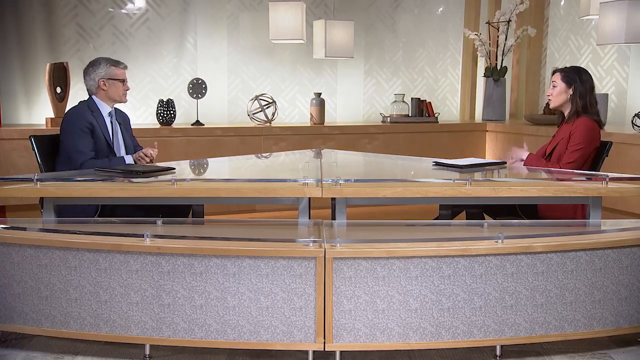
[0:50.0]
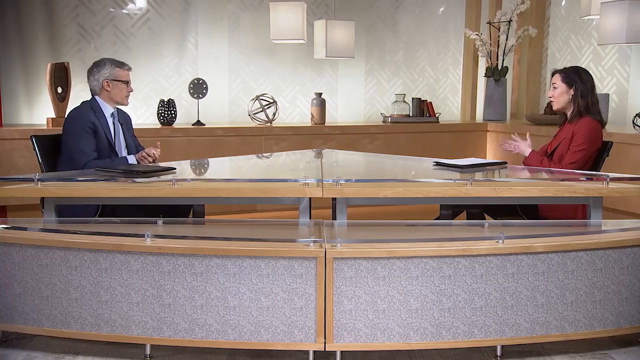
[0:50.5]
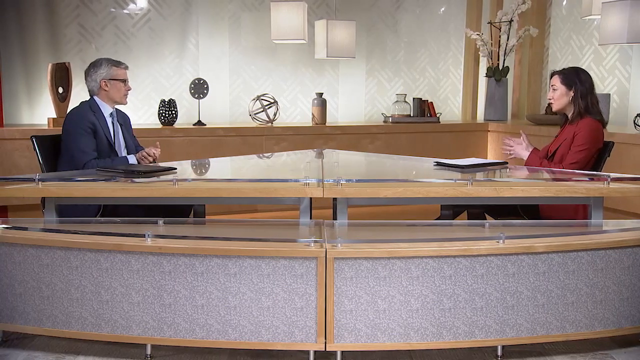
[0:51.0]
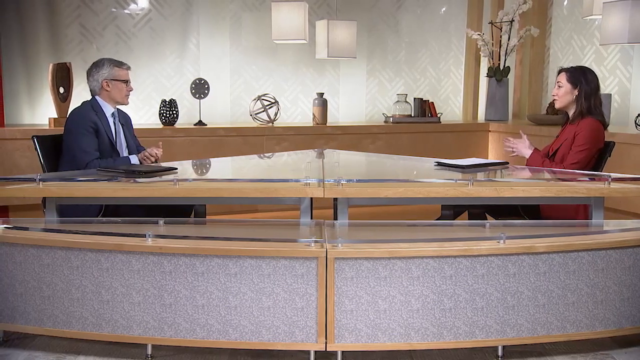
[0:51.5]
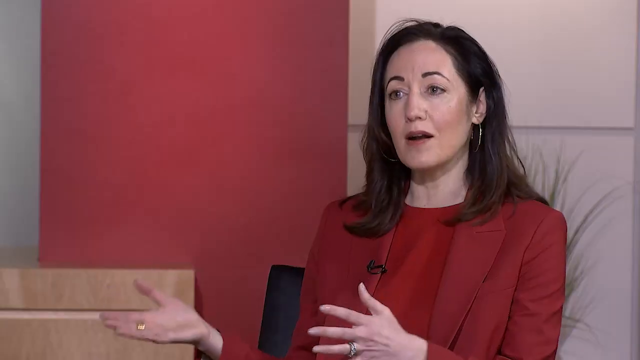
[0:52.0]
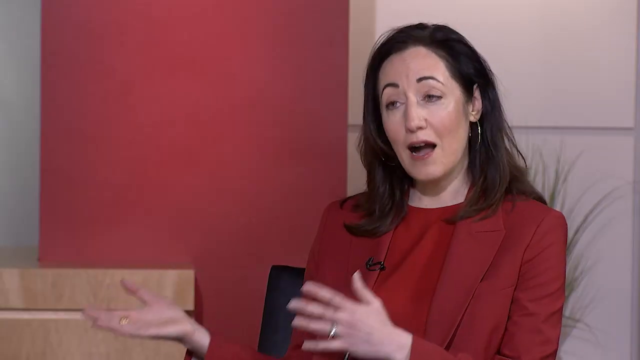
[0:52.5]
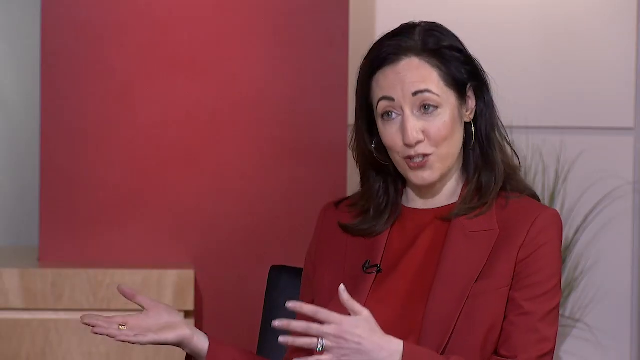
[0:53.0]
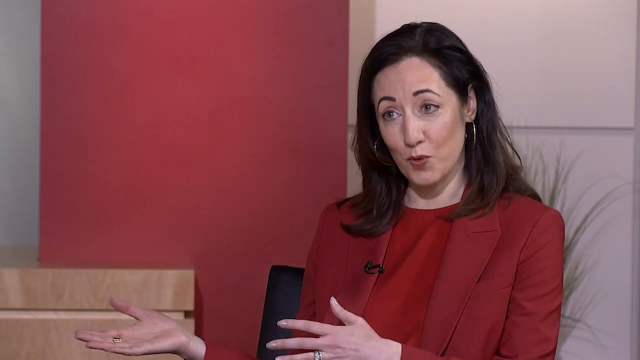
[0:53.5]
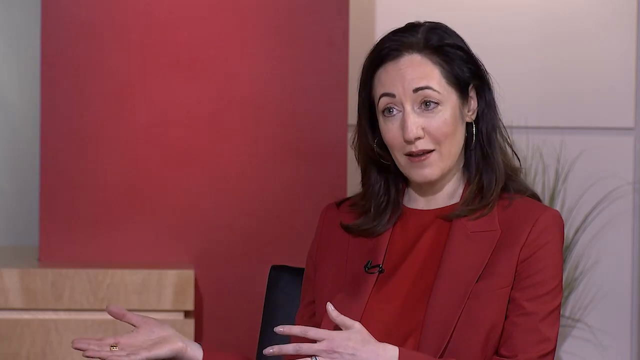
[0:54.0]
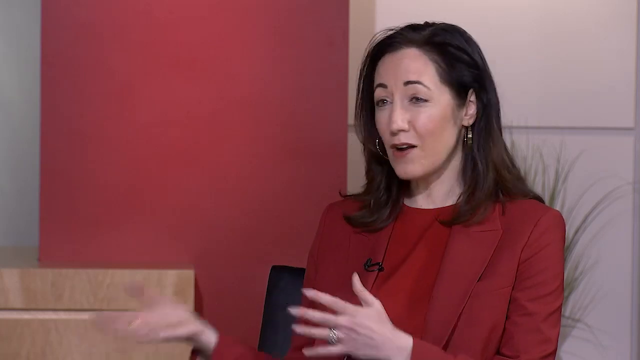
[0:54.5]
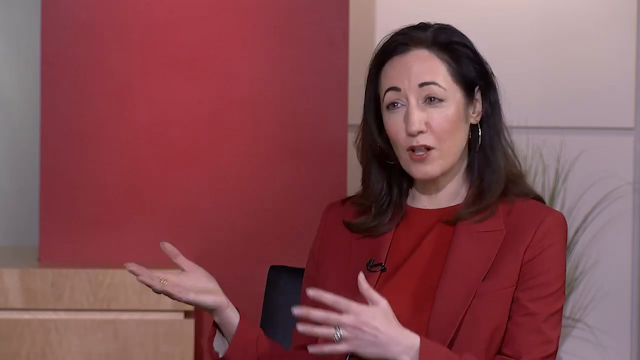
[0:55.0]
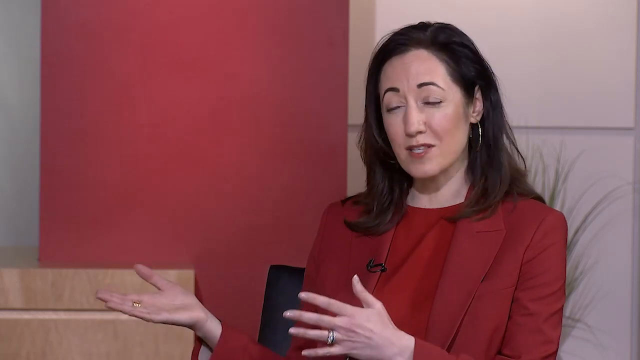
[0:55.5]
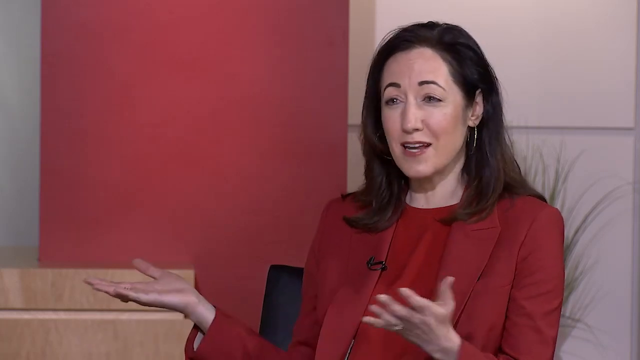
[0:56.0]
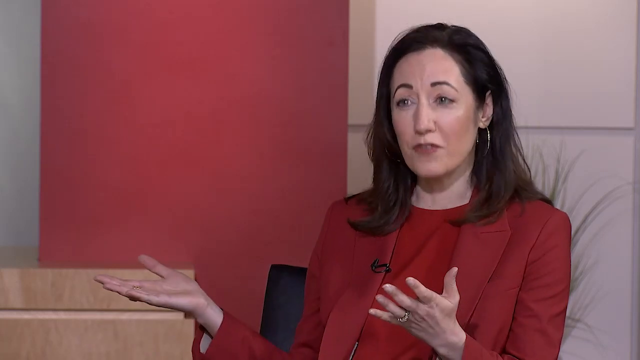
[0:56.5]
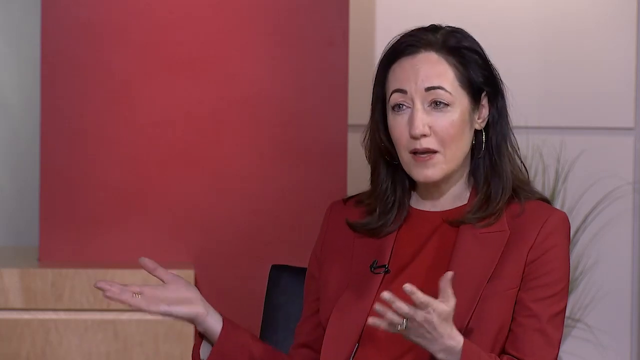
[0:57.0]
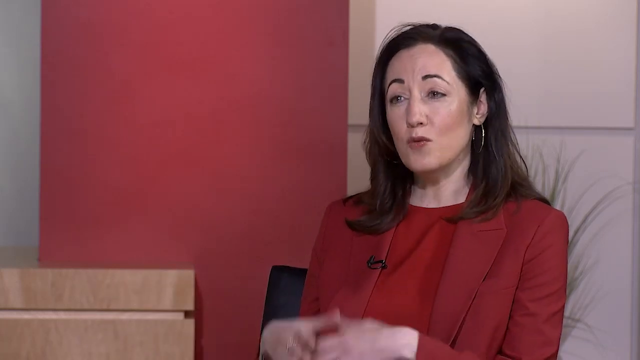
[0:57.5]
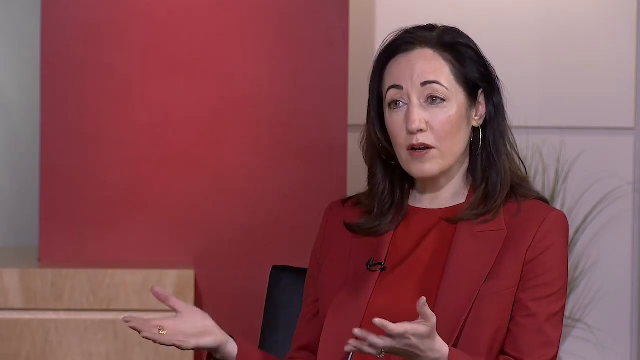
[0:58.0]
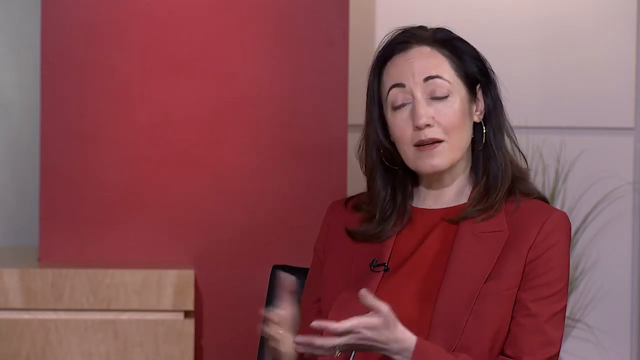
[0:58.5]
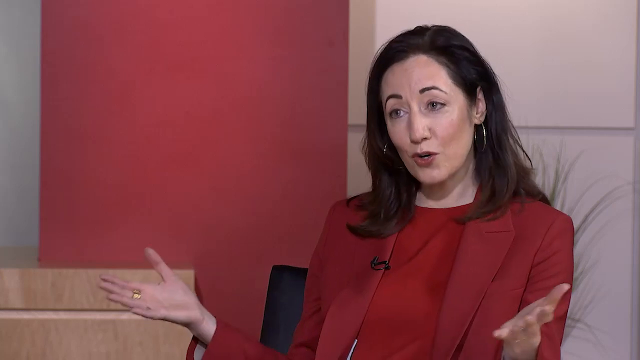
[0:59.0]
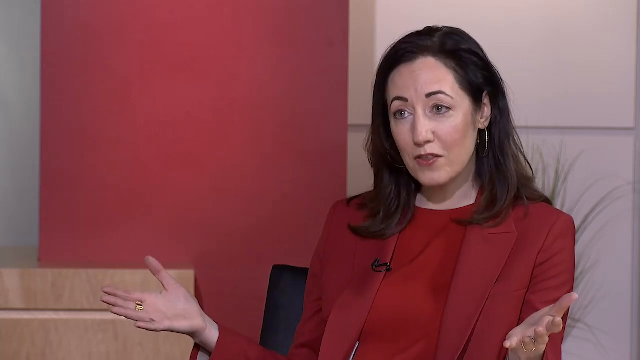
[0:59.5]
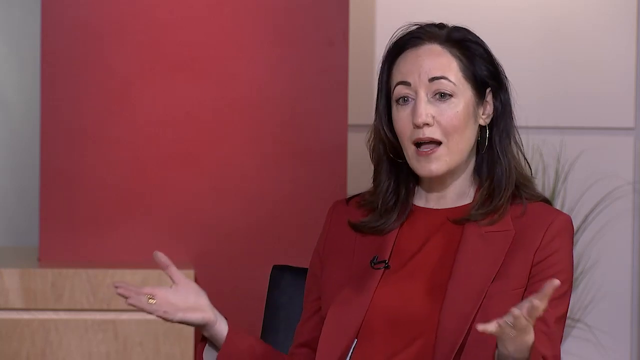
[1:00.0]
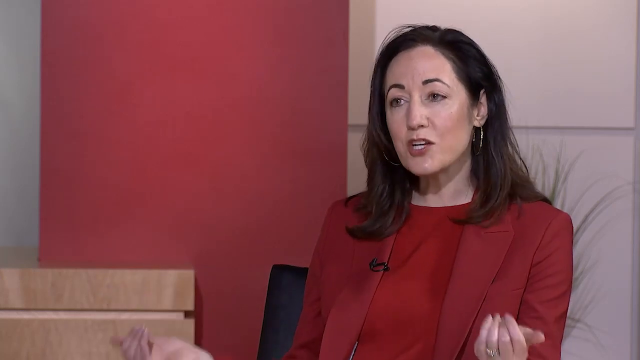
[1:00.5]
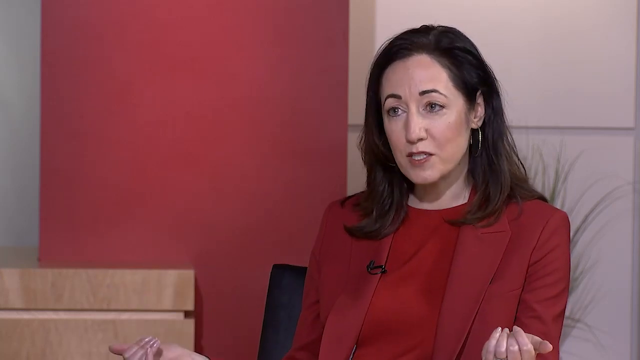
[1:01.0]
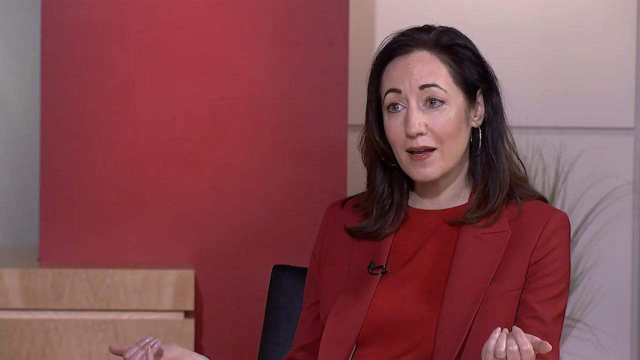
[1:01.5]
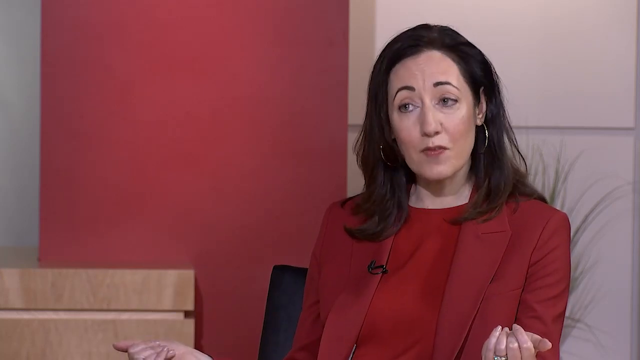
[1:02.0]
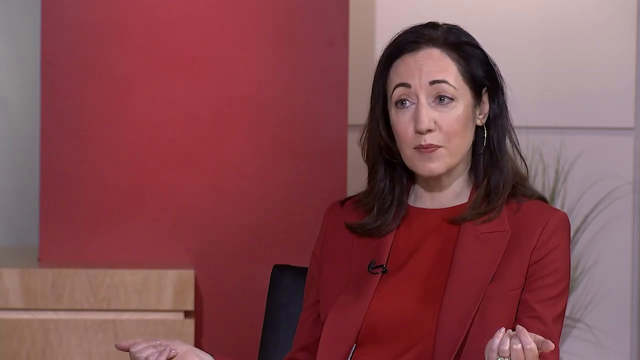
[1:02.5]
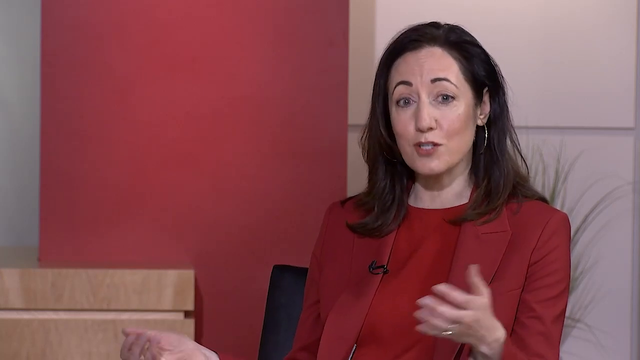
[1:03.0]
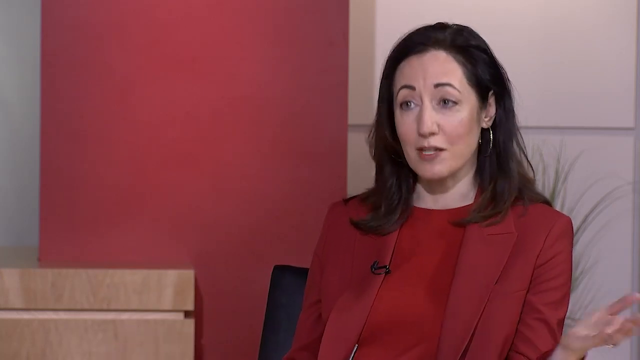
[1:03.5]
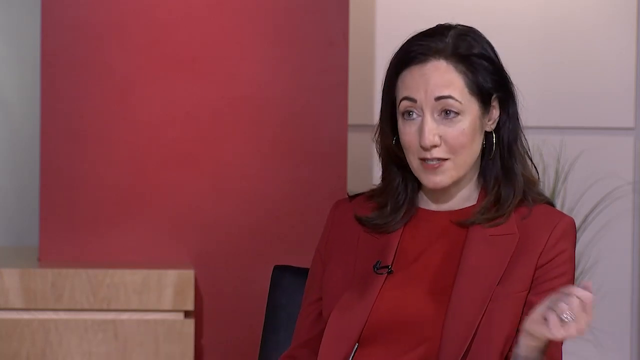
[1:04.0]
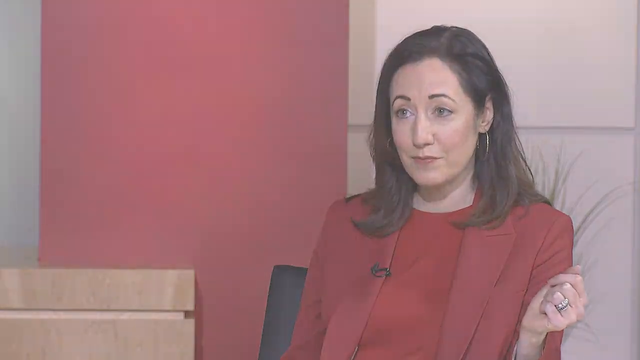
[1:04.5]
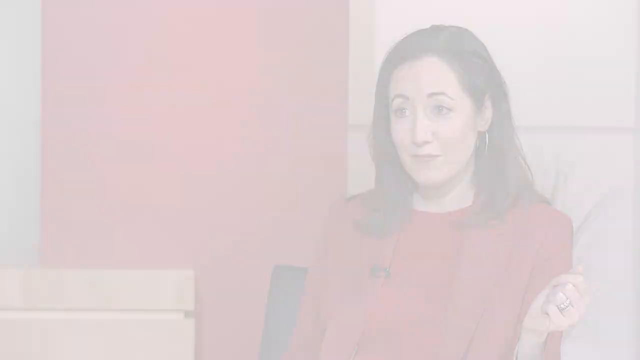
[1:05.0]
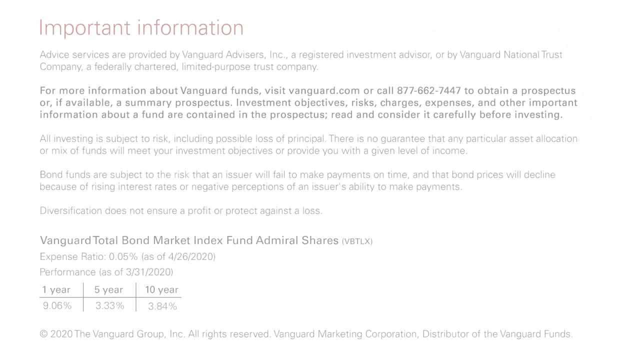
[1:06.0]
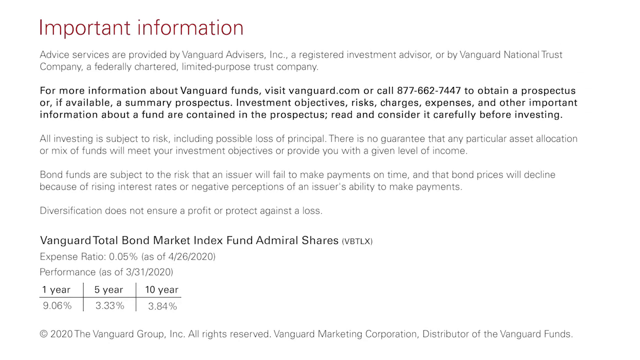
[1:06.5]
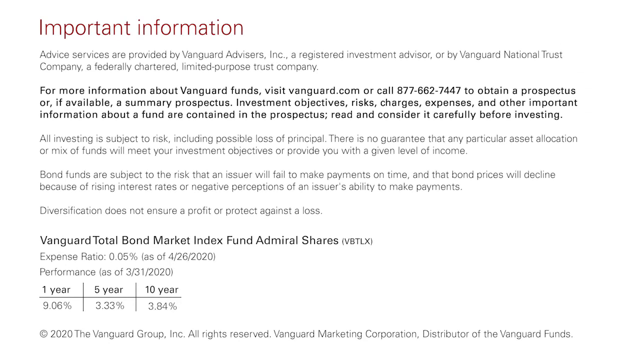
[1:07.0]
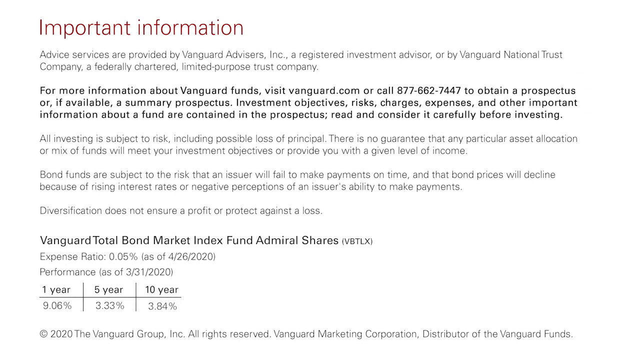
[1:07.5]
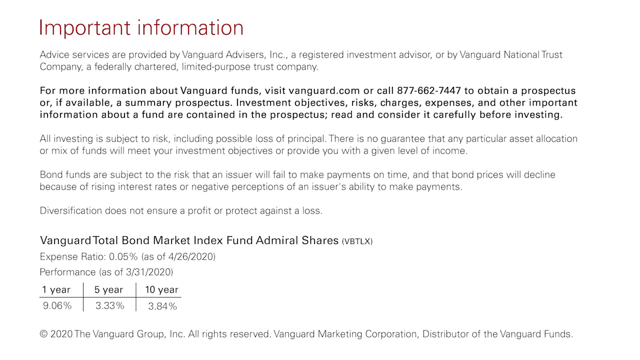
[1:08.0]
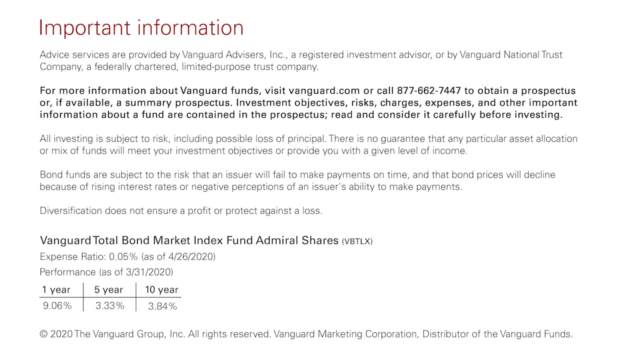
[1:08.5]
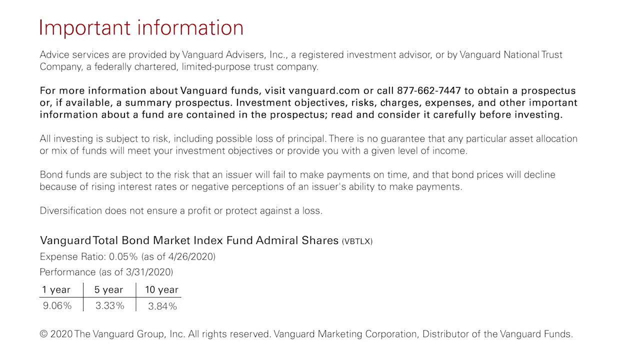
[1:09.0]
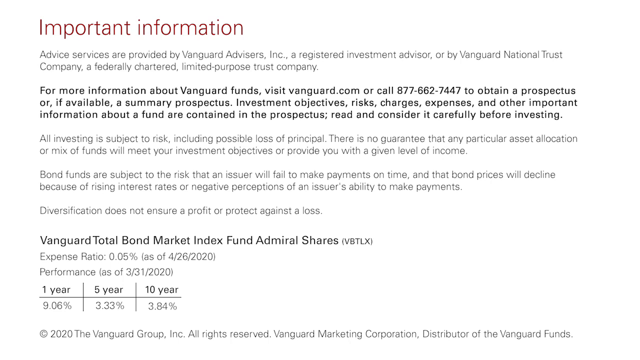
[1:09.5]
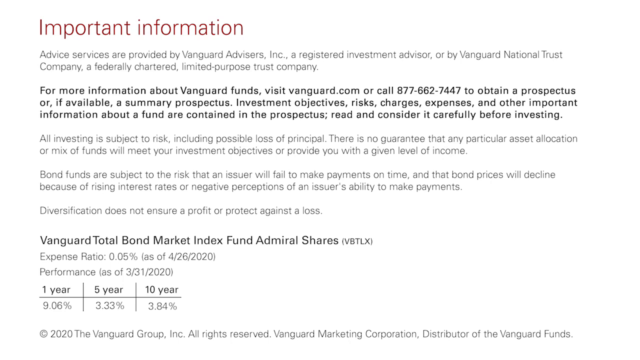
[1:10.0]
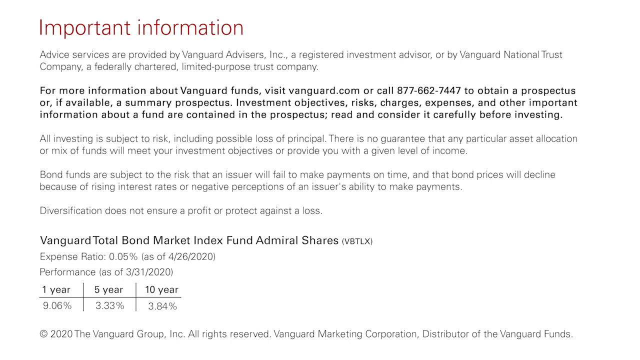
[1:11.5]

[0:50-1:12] The woman in red appears in close-up, gesturing with her hands as she speaks. The video then transitions from the studio to a final page of important information, a disclaimer that begins "Advice services are provided by Vanguard Advisors, Inc., a registered investment advisor, or by Vanguard National Trust Company, a federally charted, limited-purpose trust company." It continues with a phone number for obtaining a prospectus about the company and its fees.